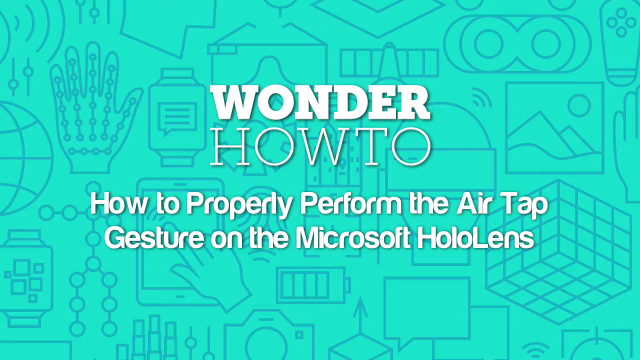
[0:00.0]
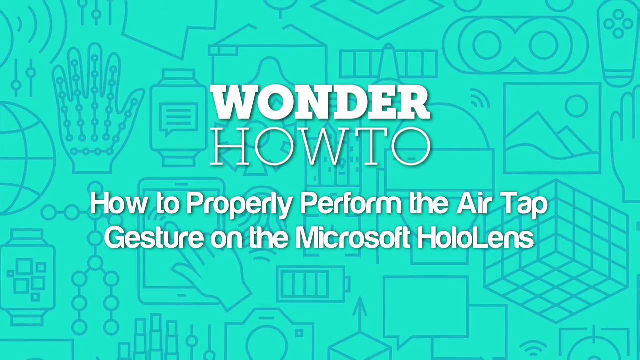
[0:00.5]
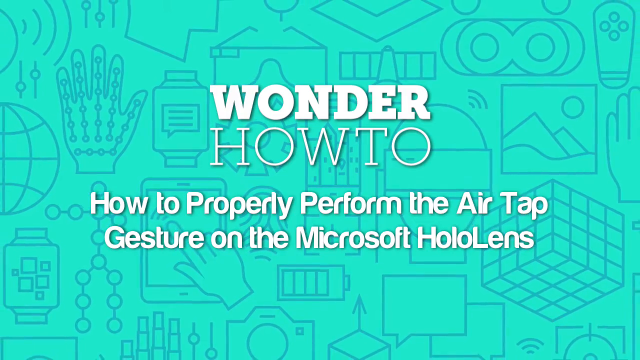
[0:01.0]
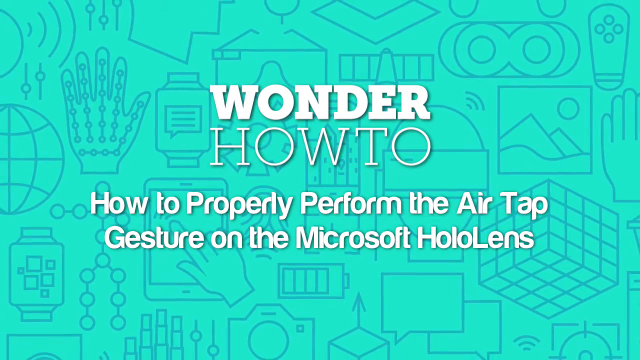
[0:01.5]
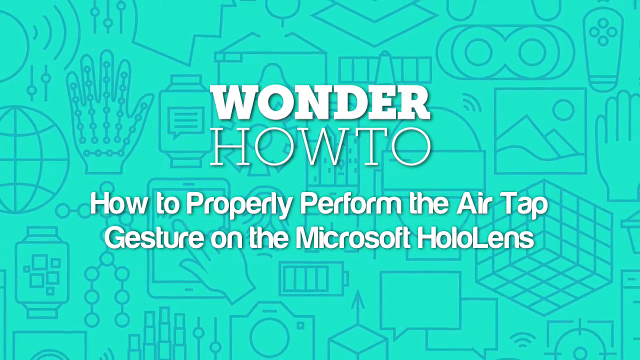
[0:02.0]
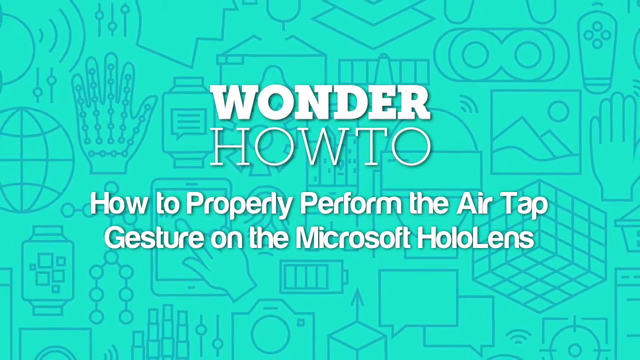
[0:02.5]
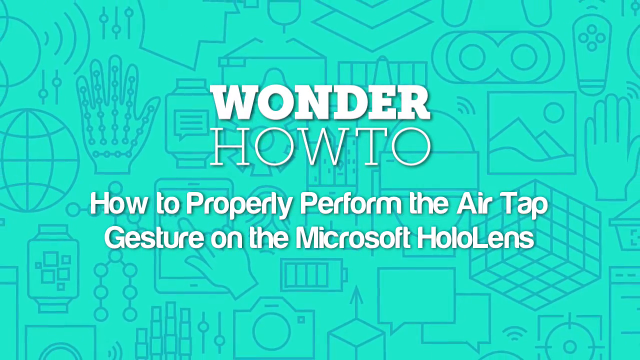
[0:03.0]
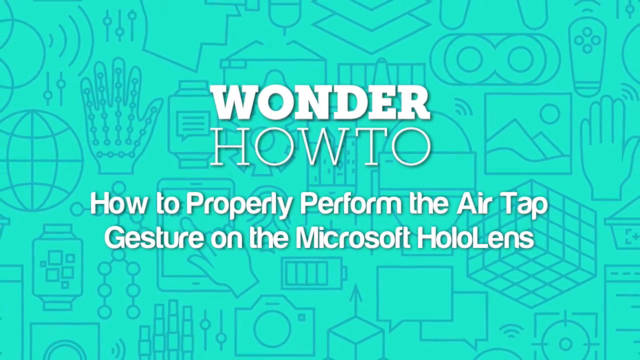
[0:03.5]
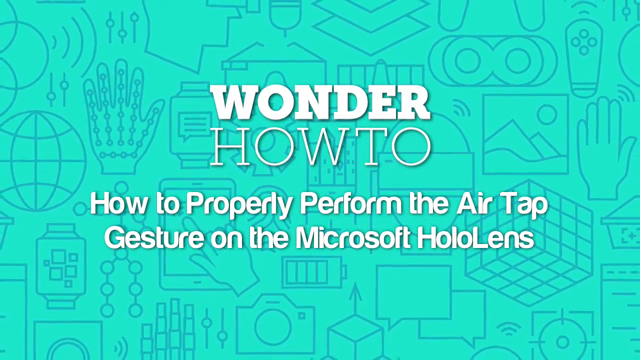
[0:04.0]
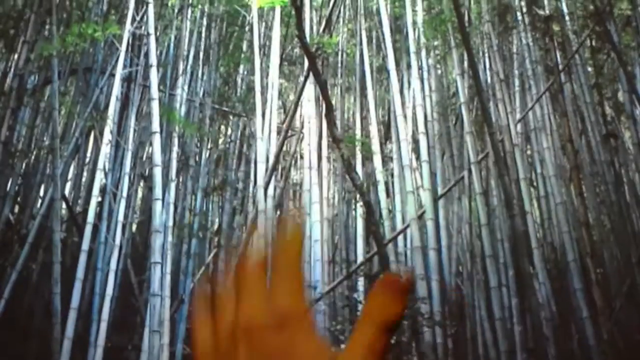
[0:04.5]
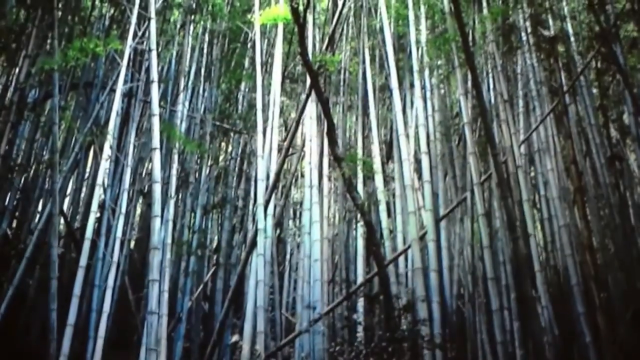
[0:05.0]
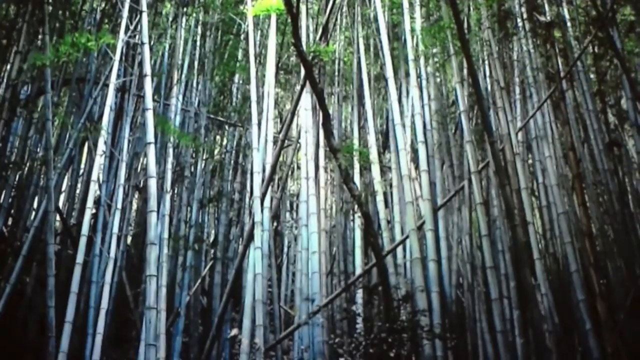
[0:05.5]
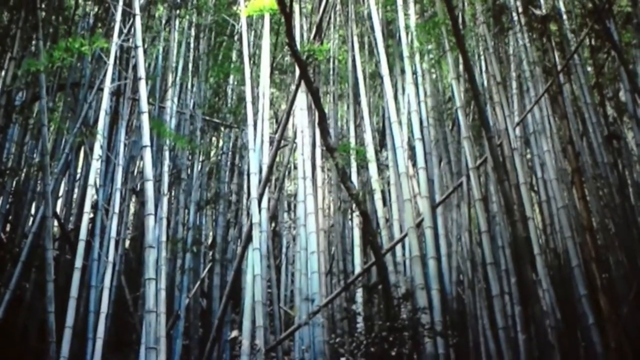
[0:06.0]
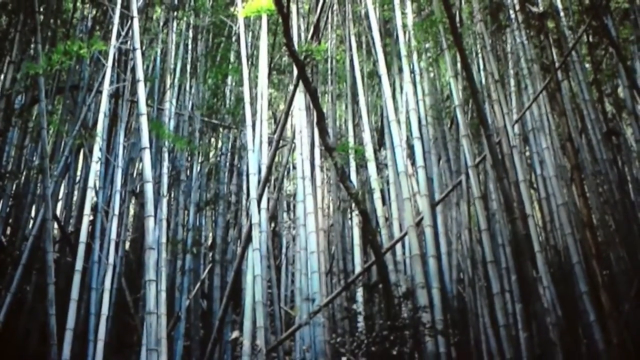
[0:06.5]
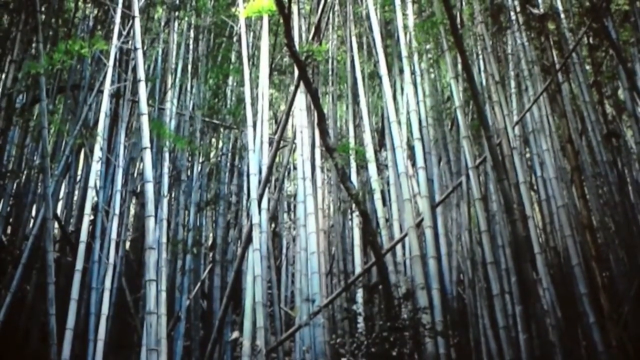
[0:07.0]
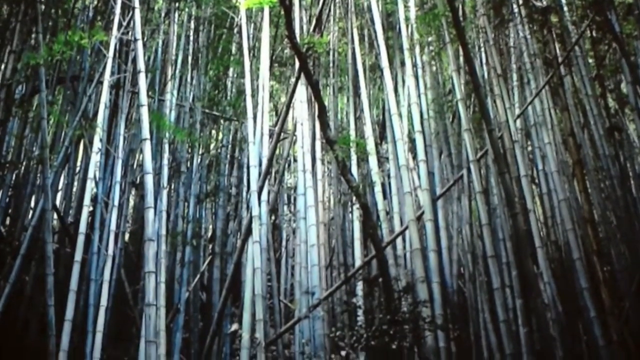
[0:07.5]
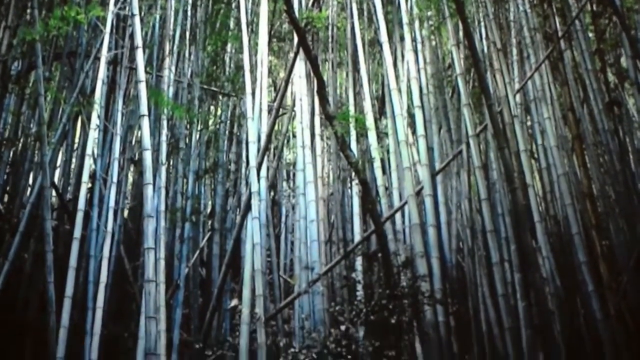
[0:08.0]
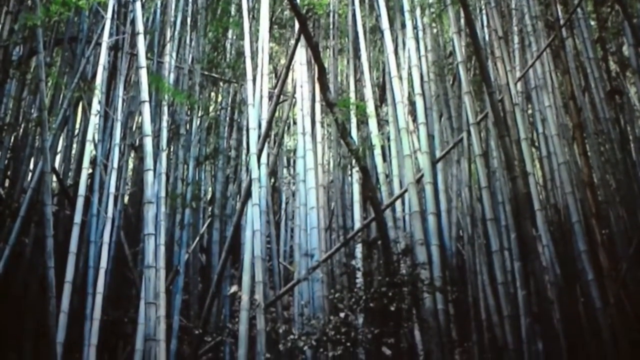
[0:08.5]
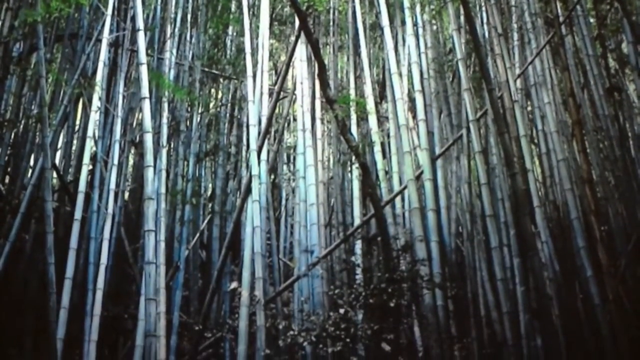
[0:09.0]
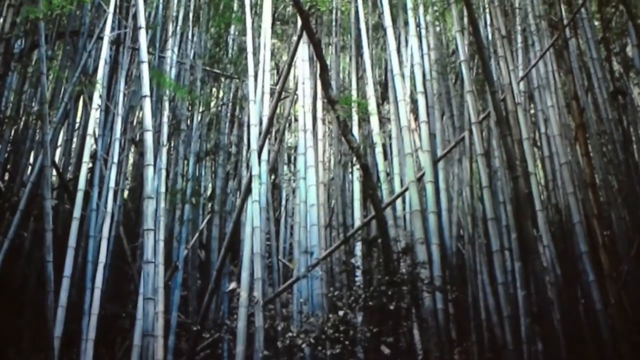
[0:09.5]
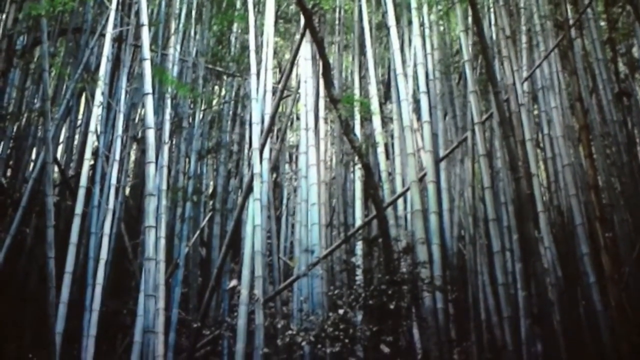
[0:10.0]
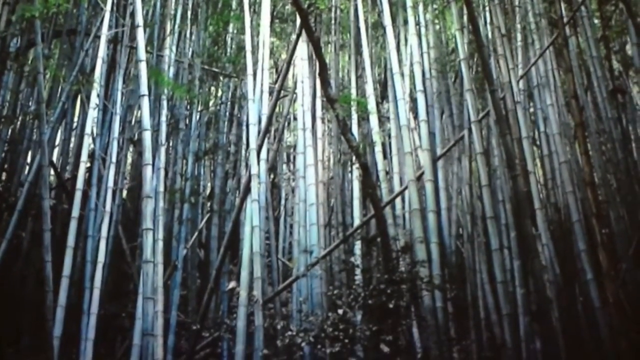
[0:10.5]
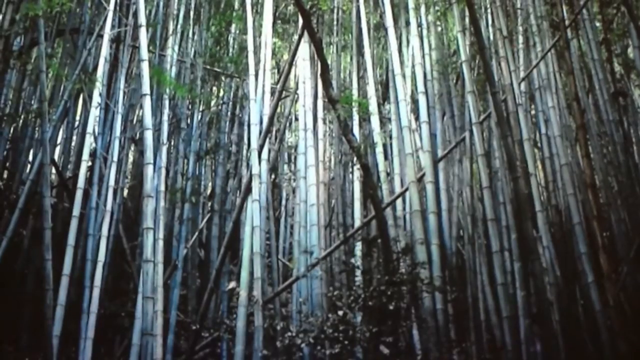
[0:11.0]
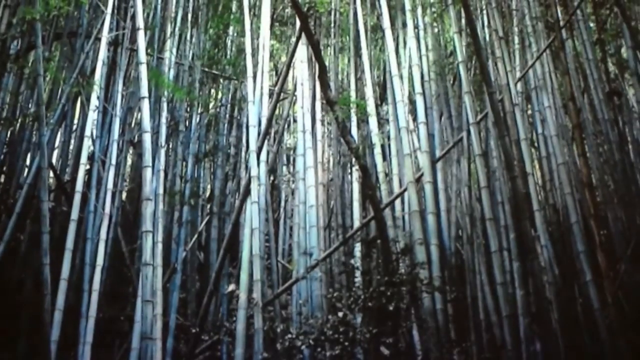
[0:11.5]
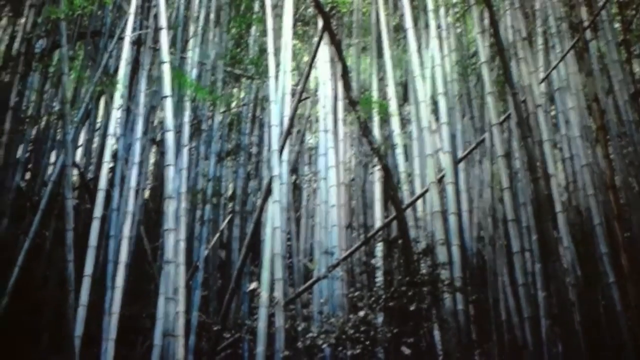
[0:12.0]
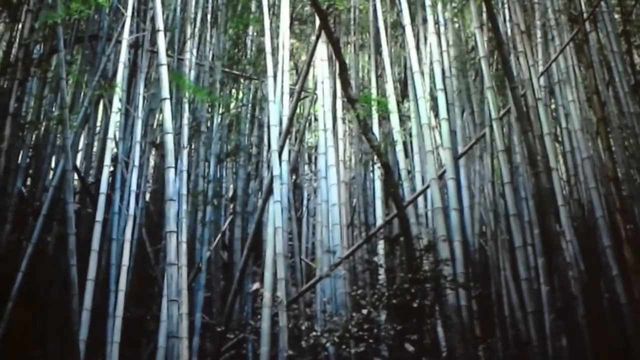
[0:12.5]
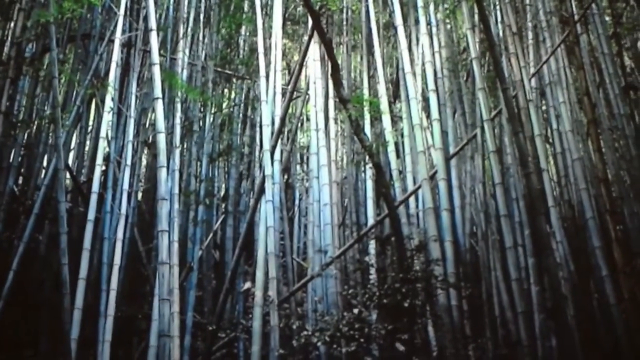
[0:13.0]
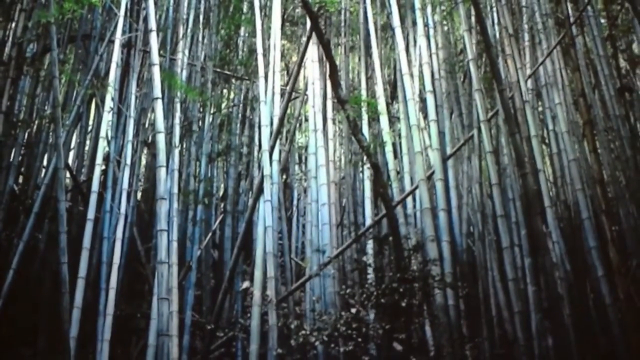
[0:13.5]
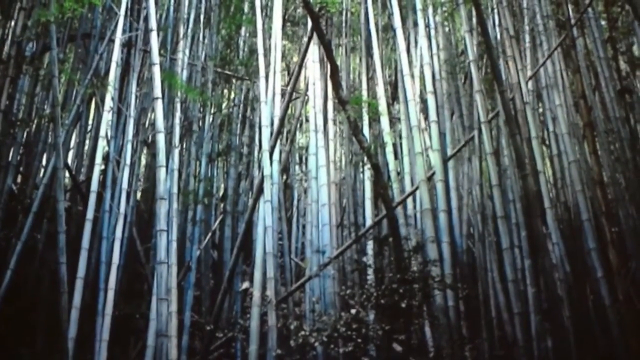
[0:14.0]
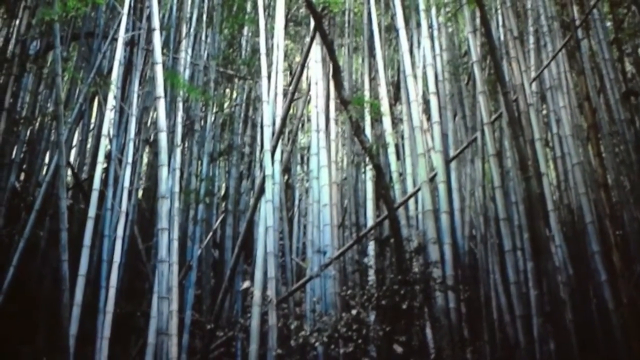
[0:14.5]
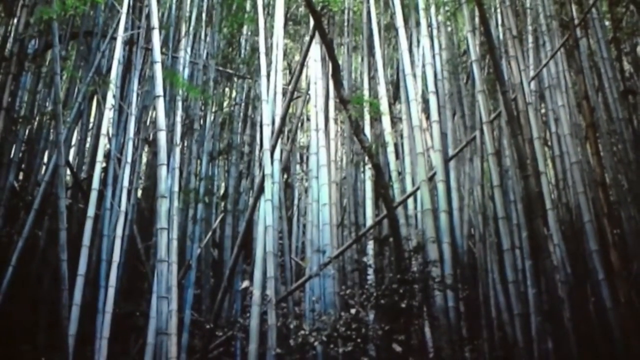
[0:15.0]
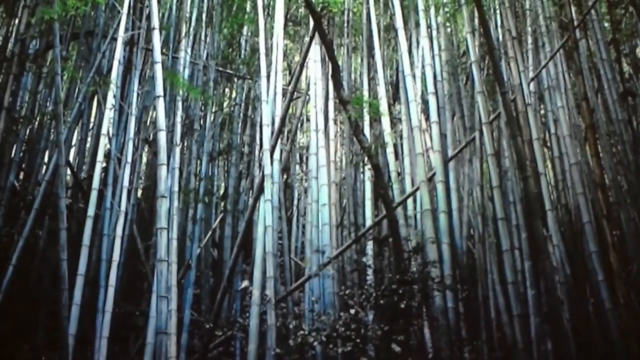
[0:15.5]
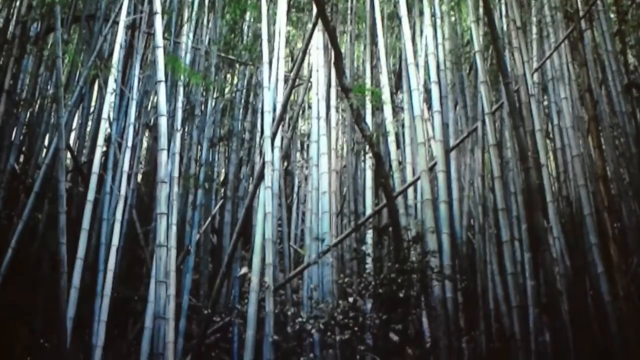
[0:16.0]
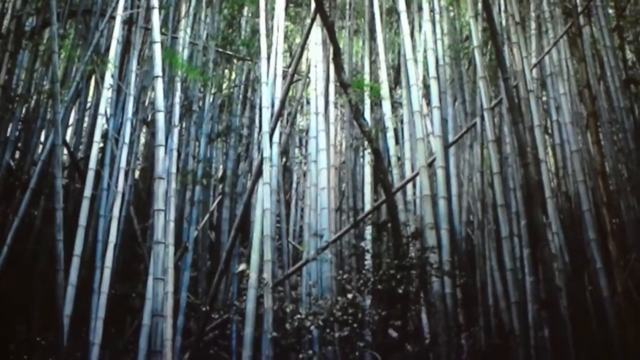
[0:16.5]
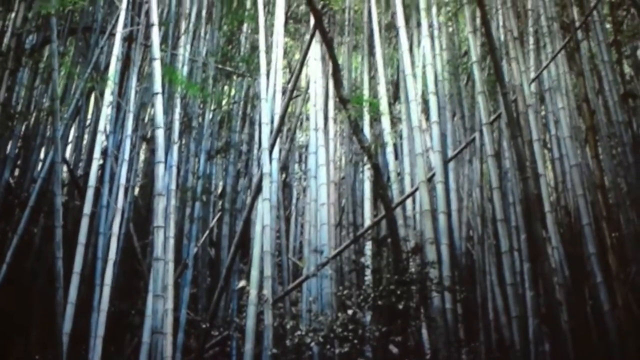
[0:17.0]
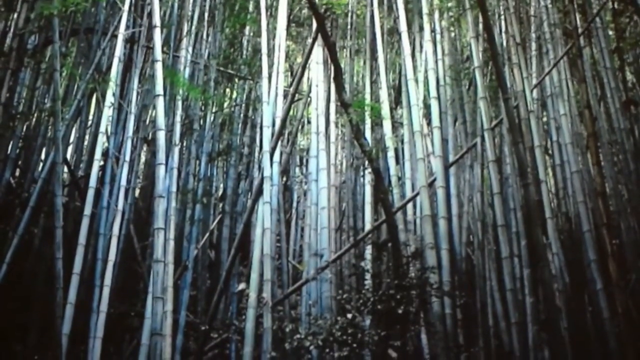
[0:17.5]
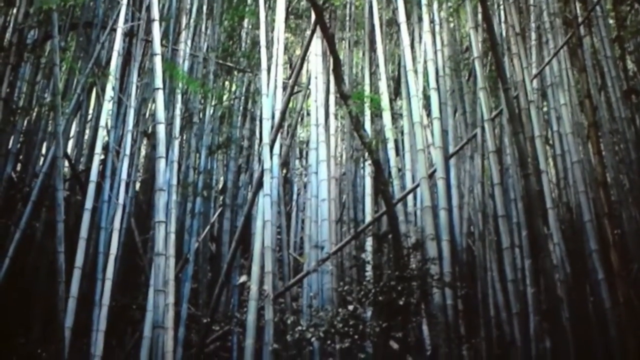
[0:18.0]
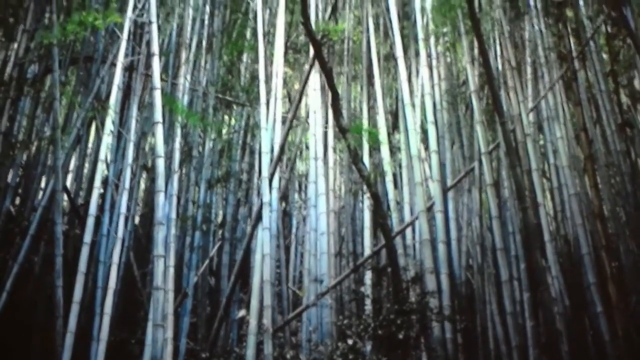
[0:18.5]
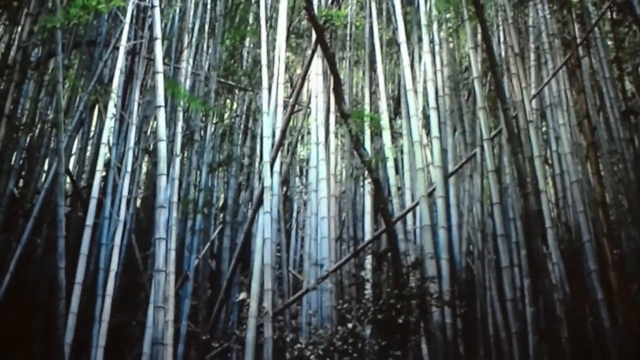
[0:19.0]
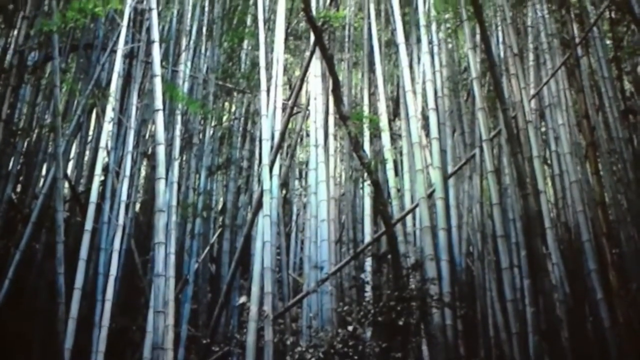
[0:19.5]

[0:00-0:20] The video opens on an intro screen with what looks like a green background covered in many icons drawn with a pale gray line: a cube, a hand, a hand pointing at a smartphone, a battery symbol, an image icon and more, all on a pale green background. White text in the middle reads "wonder how to," and below it the text reads "how to properly perform the air tap gesture on the Microsoft HoloLens." The background slowly zooms out as the white text appears. The video then transitions to what looks like a bamboo forest. A left hand appears in the front of the frame with its palm facing away and waves a little, as if waving hello, then moves away toward the bottom. The view stays on the bamboo forest: many vertical sticks that look white and light brown, bamboo with segments on the side, with a bit of green at the top. The footage is a bit shaky, as if handheld, looking up and down at the bamboo and slightly tilting up and down and left and right.